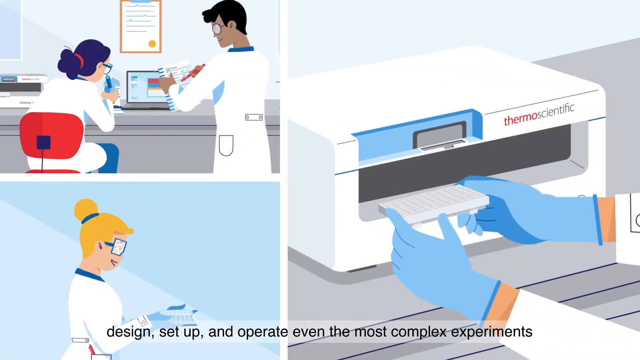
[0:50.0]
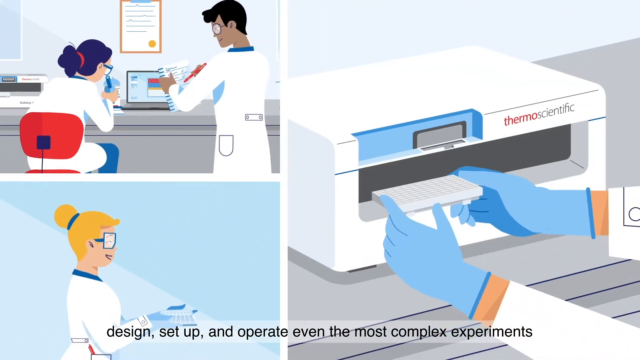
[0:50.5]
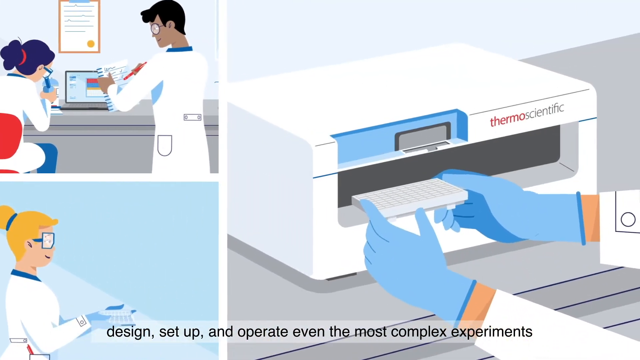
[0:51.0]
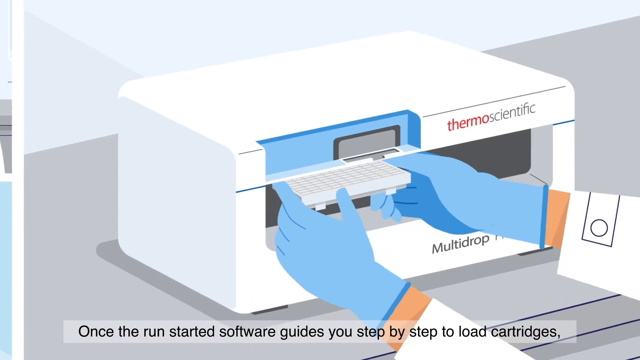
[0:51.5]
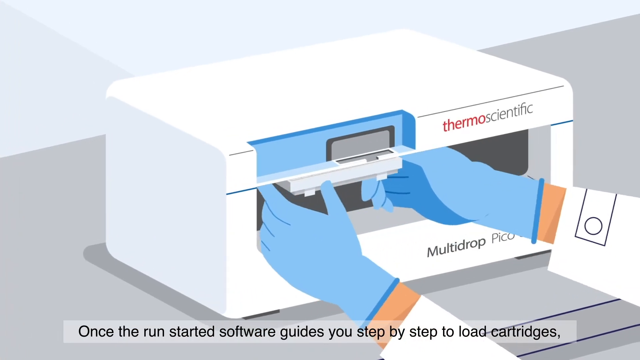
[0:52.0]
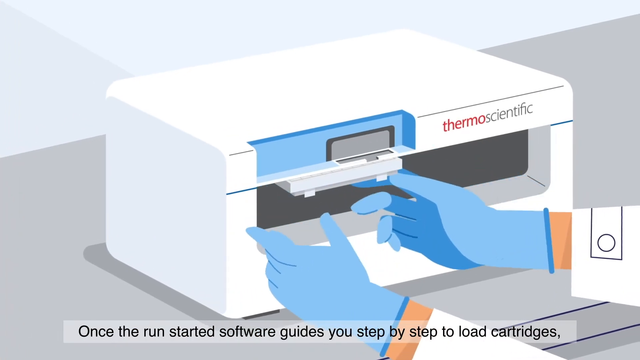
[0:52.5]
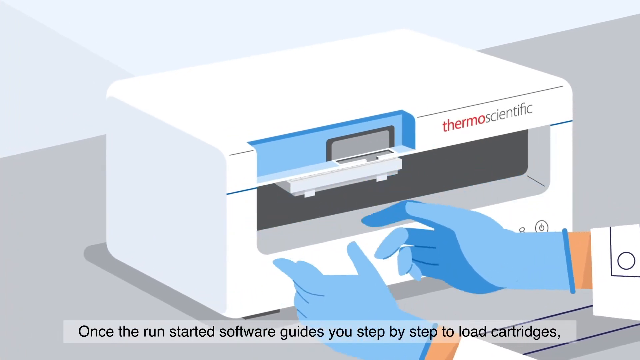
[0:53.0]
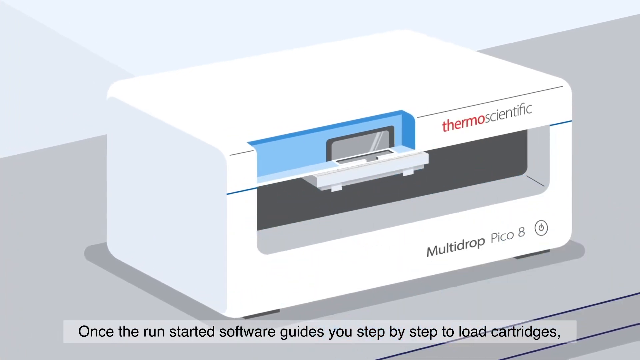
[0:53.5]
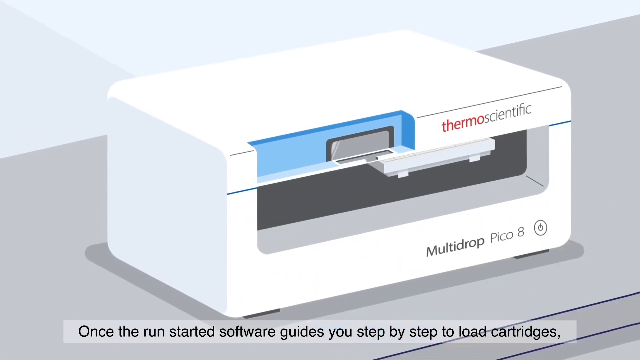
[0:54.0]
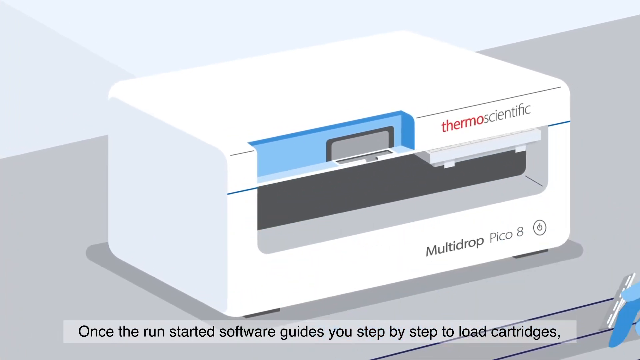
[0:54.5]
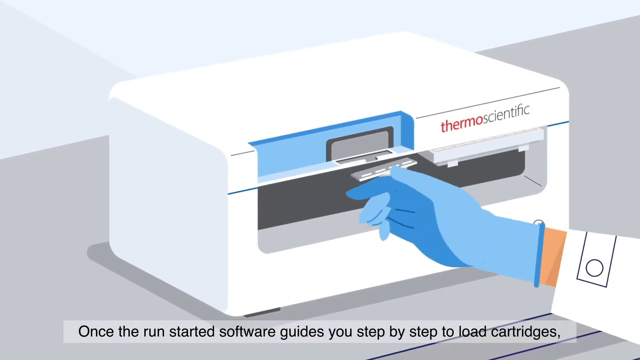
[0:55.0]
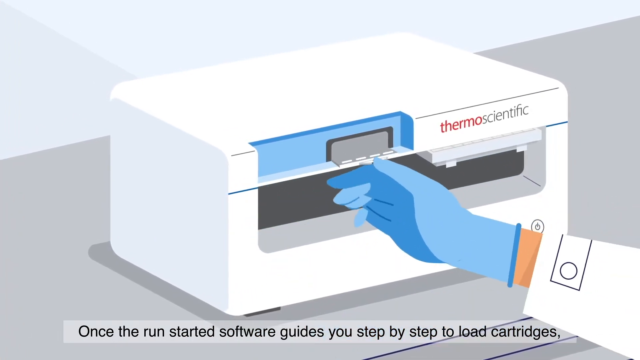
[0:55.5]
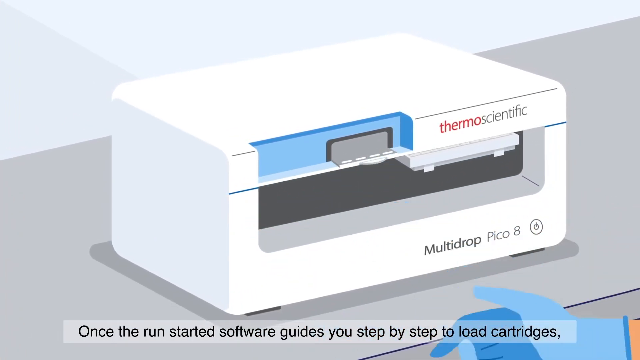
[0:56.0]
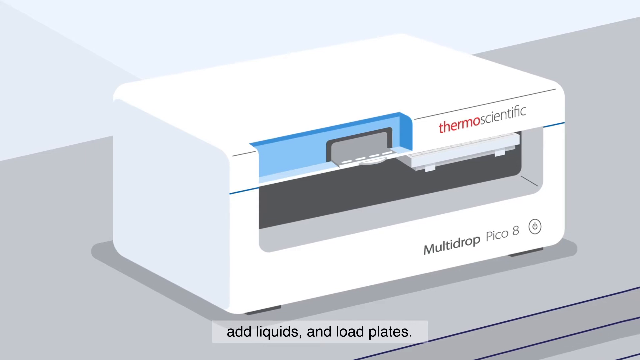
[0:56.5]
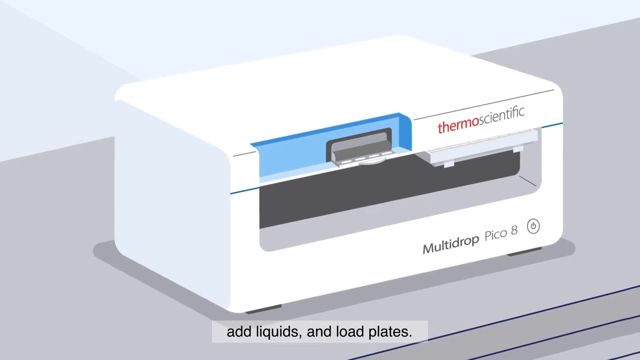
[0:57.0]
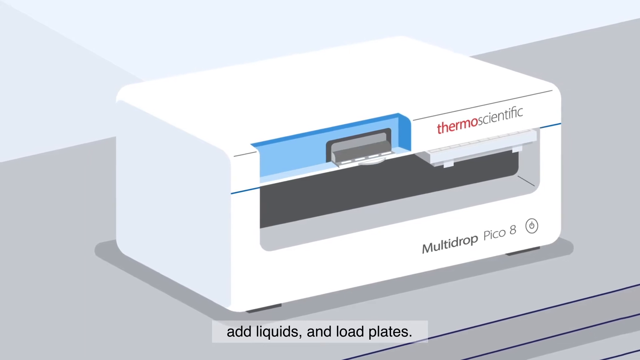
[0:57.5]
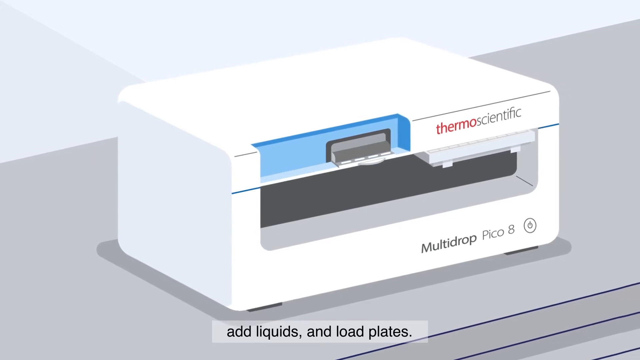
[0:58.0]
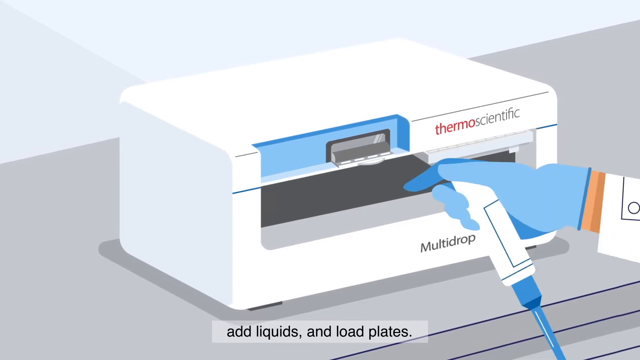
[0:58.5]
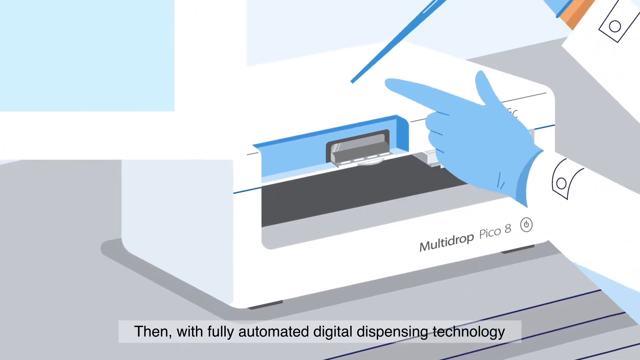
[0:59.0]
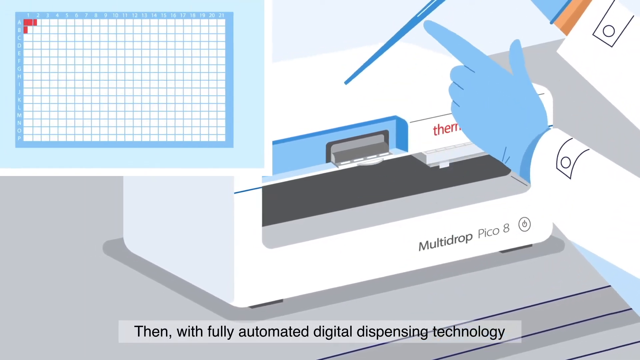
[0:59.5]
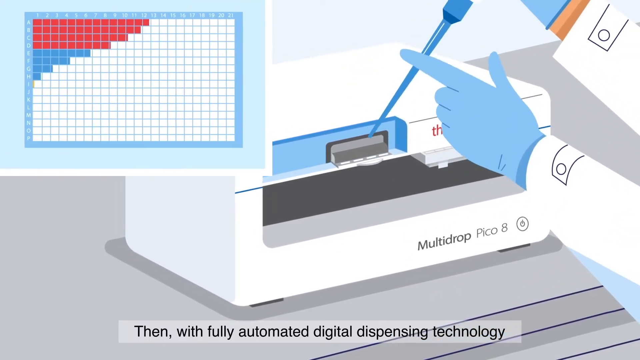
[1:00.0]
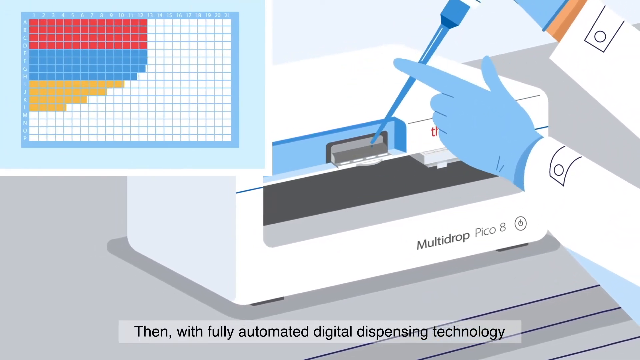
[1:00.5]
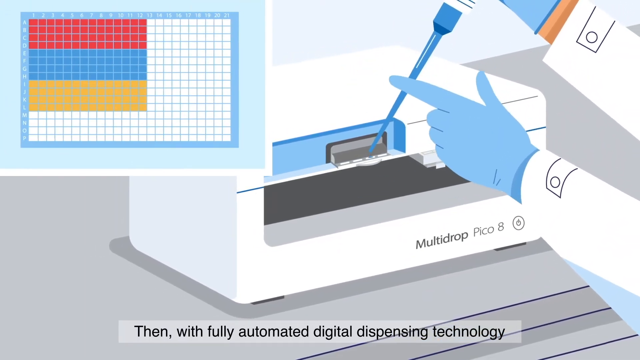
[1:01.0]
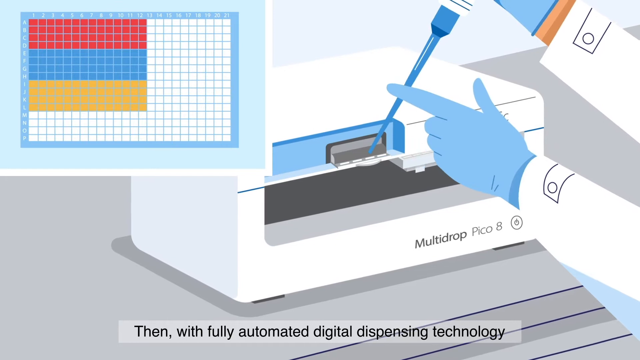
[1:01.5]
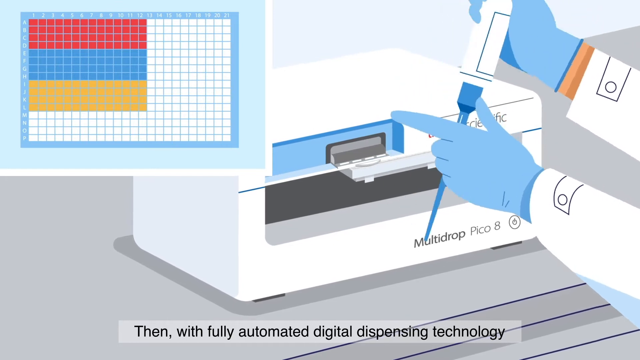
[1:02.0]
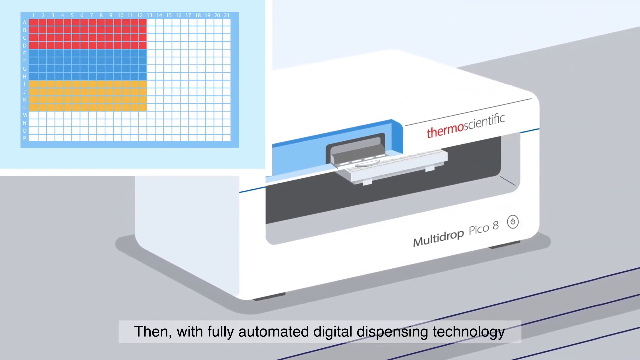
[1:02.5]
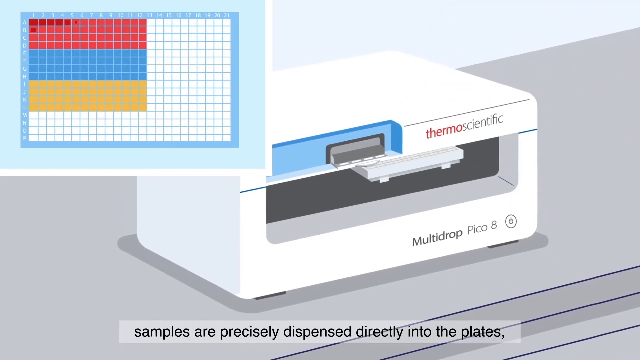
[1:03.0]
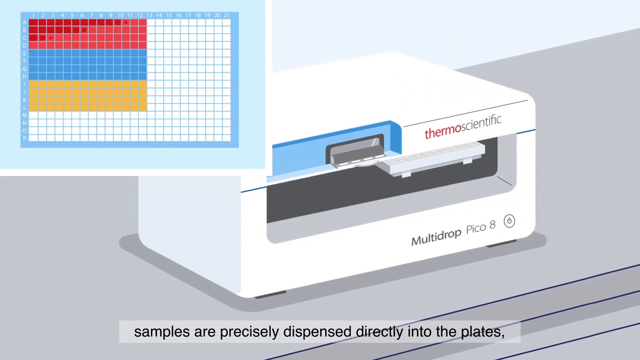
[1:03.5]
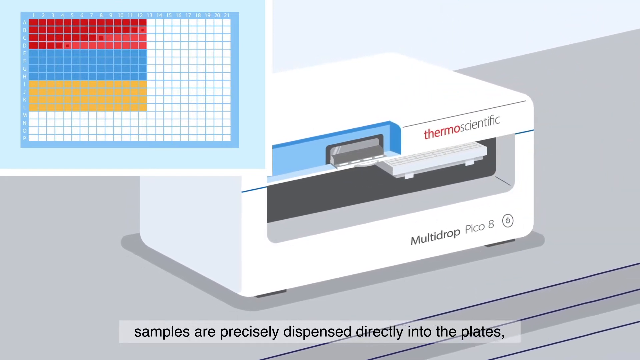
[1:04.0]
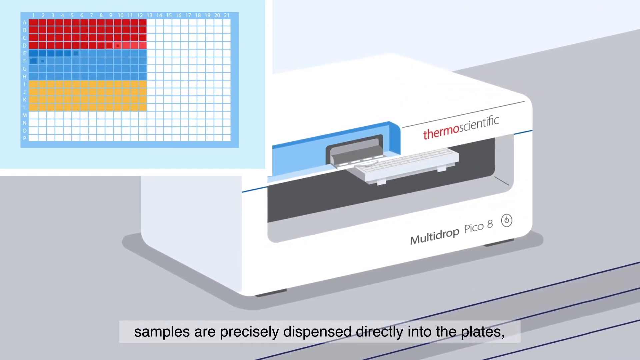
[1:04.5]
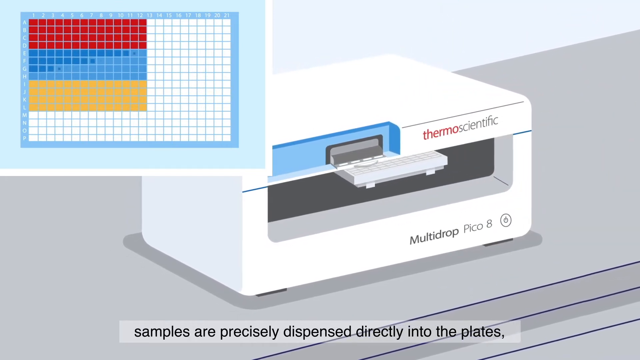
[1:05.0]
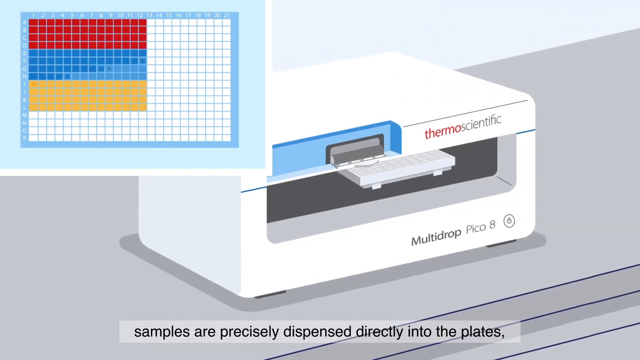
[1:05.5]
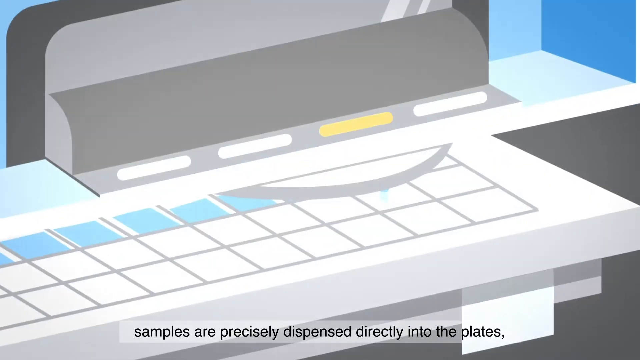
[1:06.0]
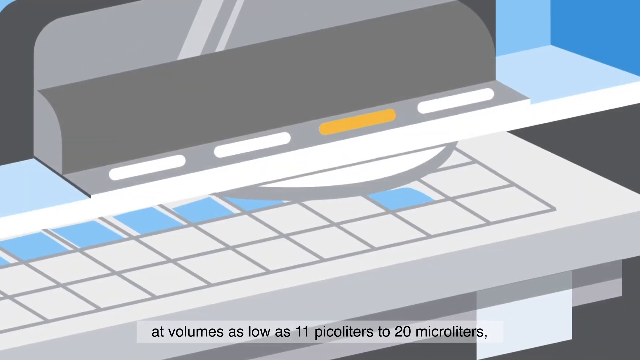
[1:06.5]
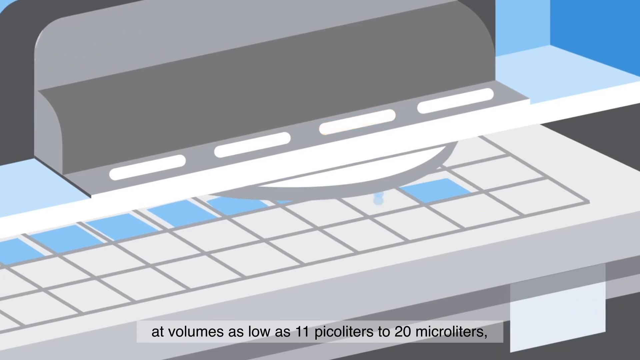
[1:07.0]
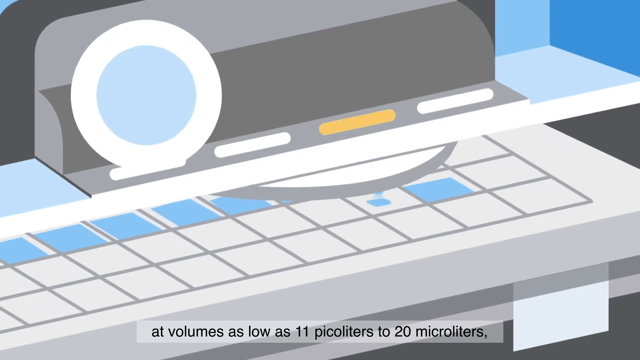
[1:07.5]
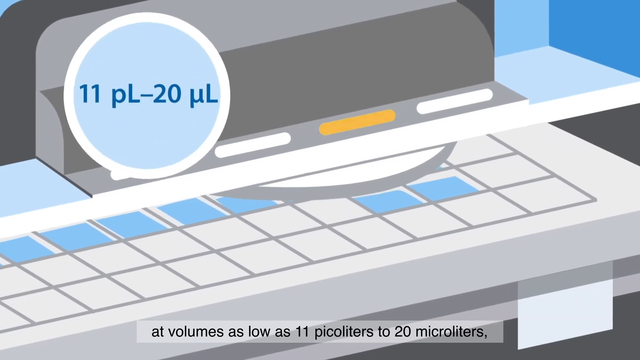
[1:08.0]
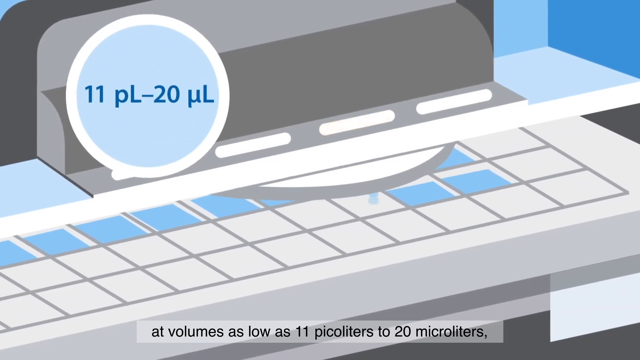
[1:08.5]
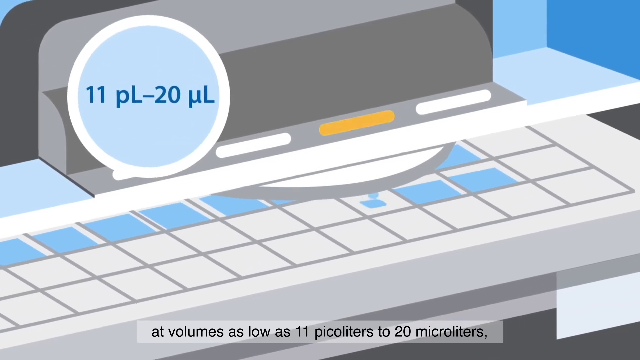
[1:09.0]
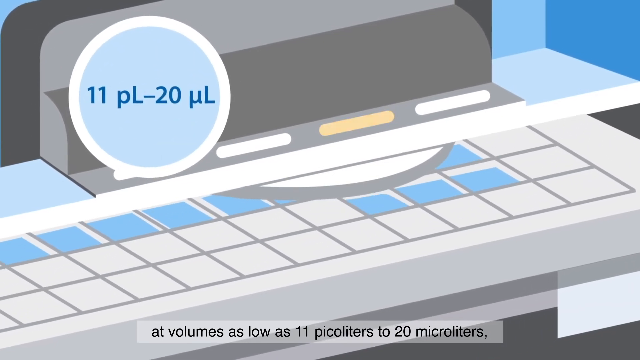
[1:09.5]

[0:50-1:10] Three different illustrations appear, separated by white lines. The top left illustration shows a male and a female. The female has blue or purple hair tied up with a red ribbon or string, is sitting in a red chair, and wears some kind of blue pants, possibly jeans. The male has dark hair and glasses. They are both wearing lab coats and are in front of a laptop on a gray table. In the background there is some kind of certificate, diploma or paper with a seal on the wall. The bottom left illustration, below that one, shows another female with blonde hair tied into a bun on top of her head with something blue, either a ribbon or a string. She is wearing a lab coat and smiling, and the background behind her is light blue. At the bottom, black text reads "design, set up, and operate even the most complex experiments".